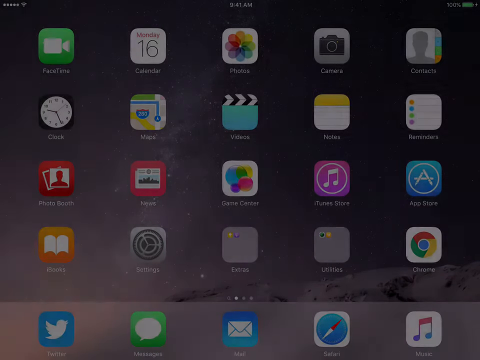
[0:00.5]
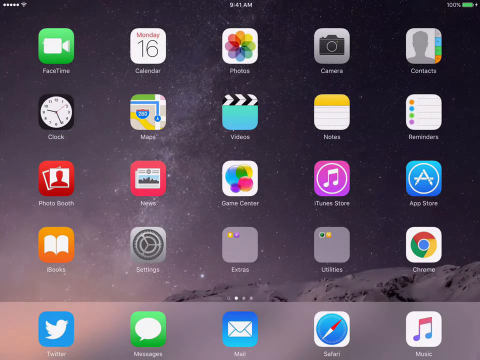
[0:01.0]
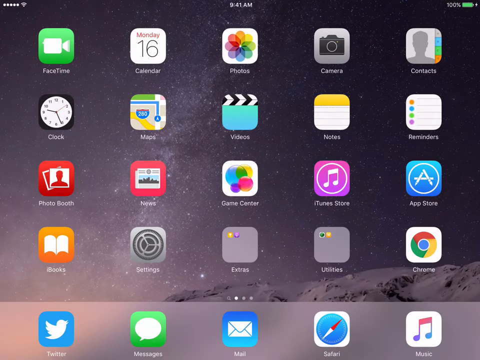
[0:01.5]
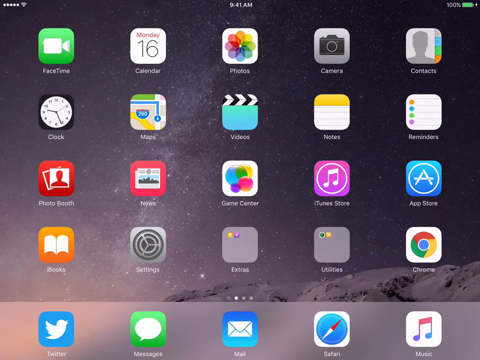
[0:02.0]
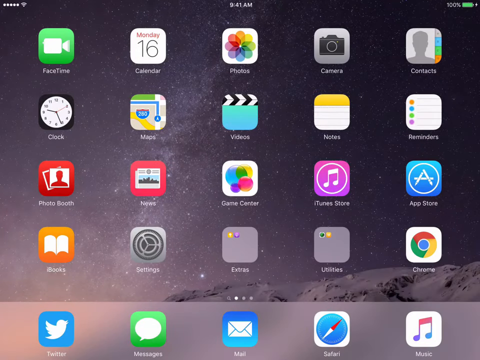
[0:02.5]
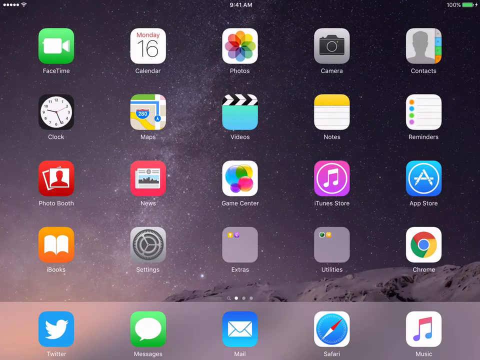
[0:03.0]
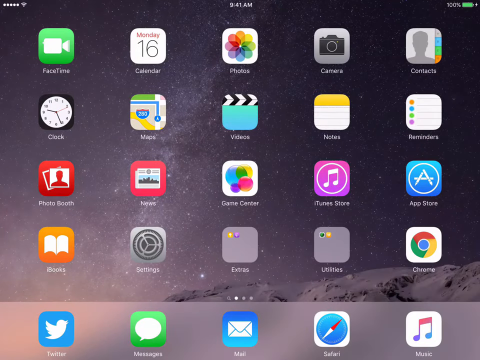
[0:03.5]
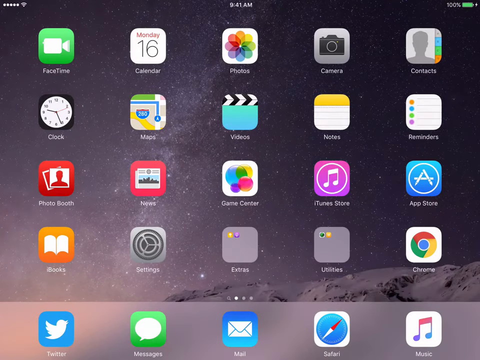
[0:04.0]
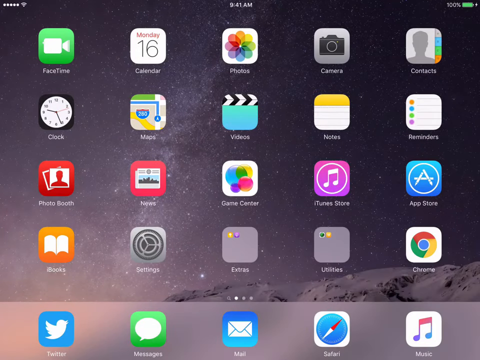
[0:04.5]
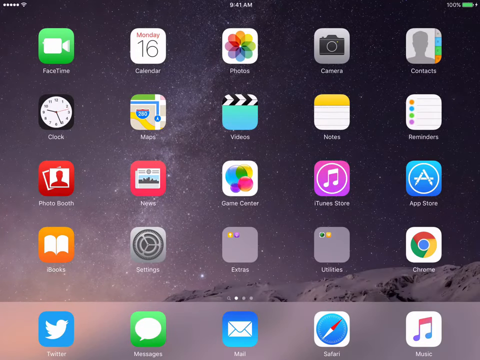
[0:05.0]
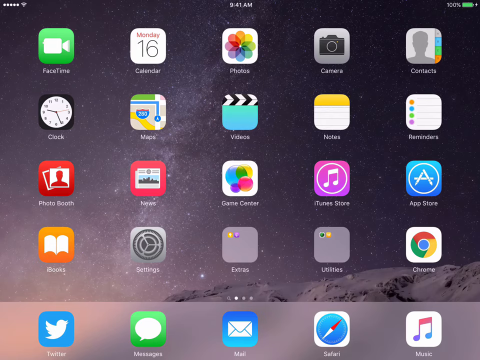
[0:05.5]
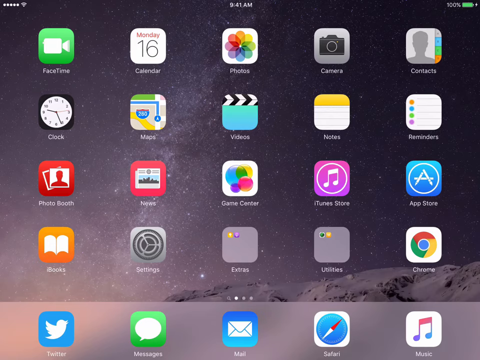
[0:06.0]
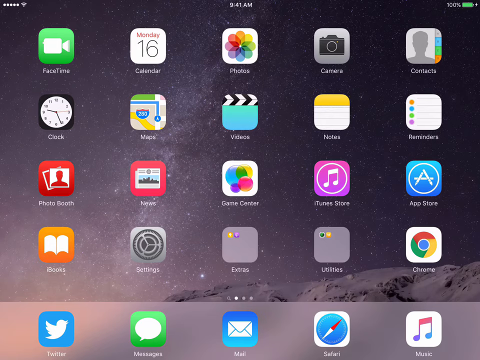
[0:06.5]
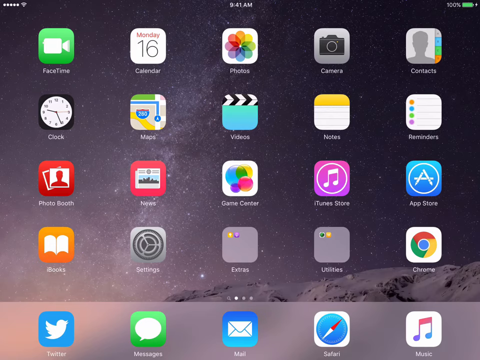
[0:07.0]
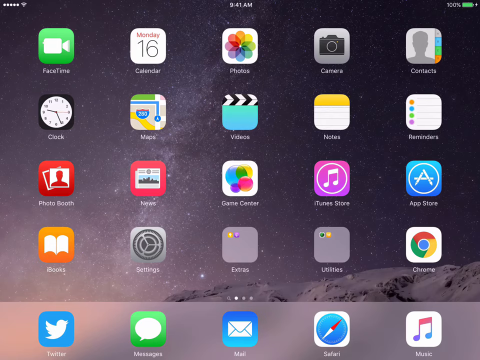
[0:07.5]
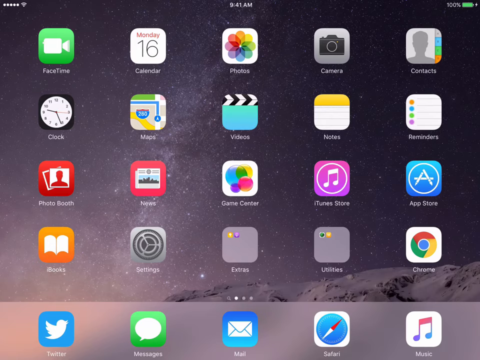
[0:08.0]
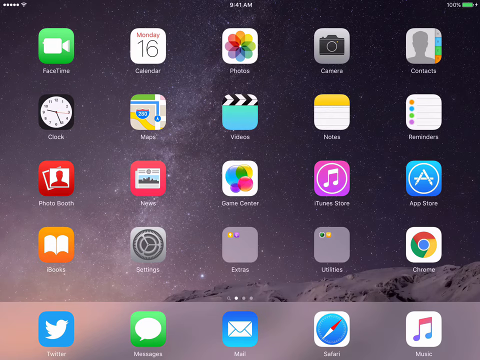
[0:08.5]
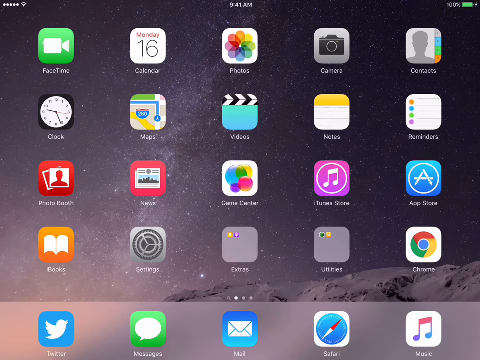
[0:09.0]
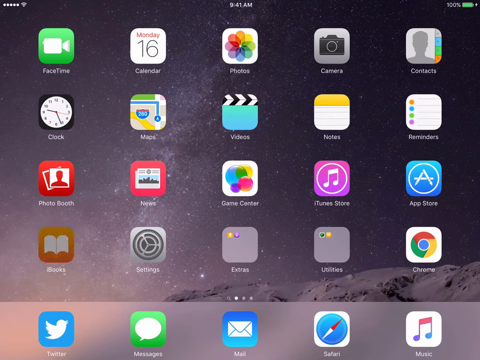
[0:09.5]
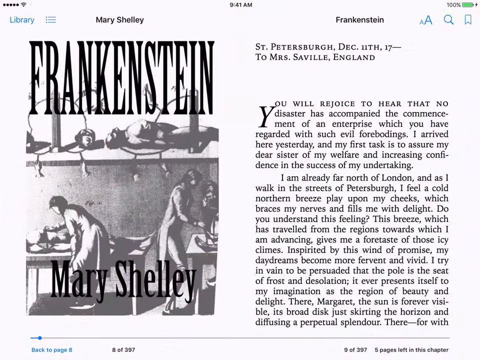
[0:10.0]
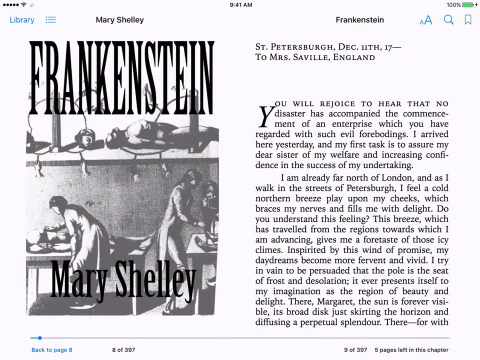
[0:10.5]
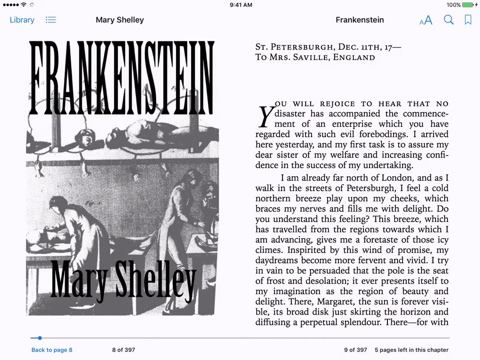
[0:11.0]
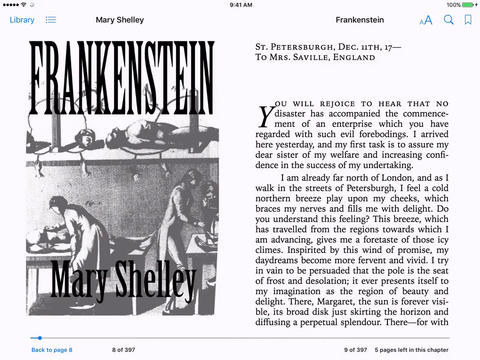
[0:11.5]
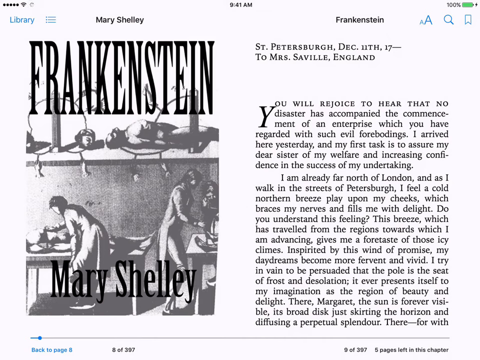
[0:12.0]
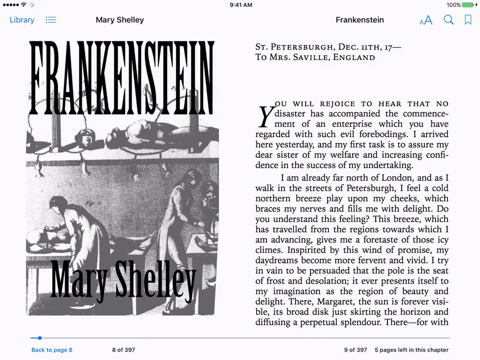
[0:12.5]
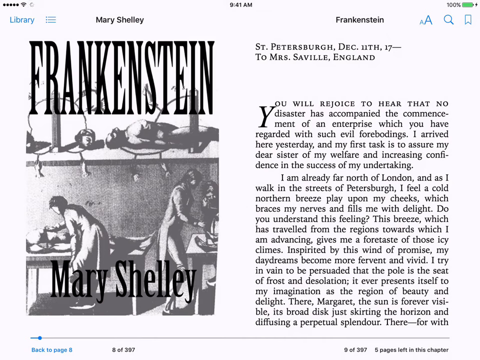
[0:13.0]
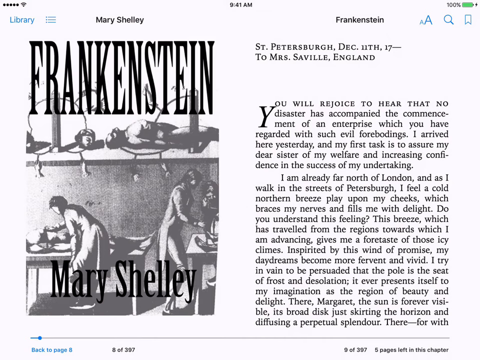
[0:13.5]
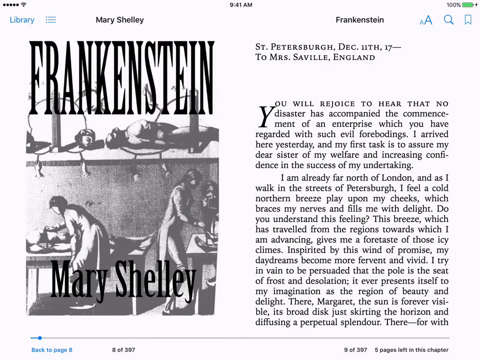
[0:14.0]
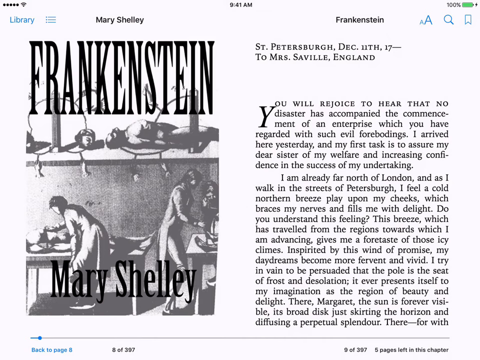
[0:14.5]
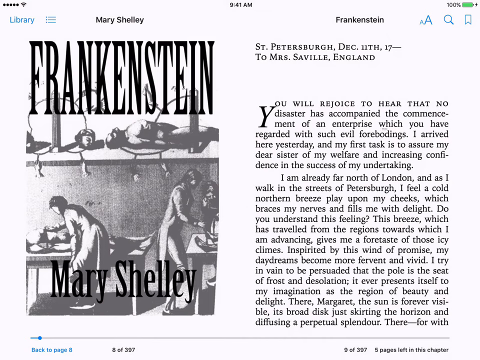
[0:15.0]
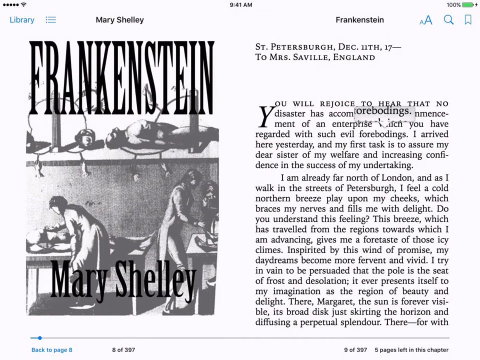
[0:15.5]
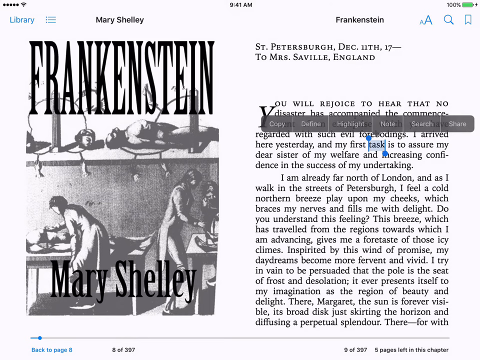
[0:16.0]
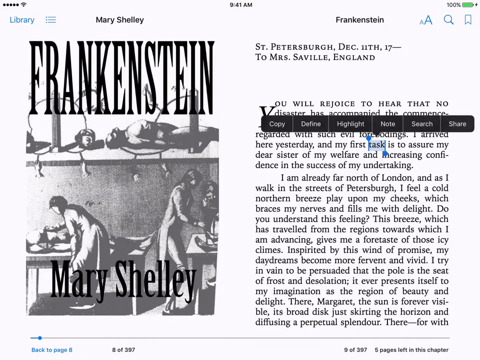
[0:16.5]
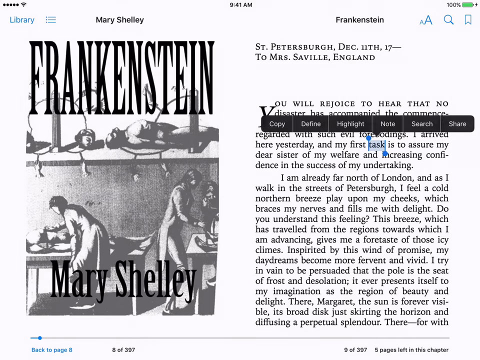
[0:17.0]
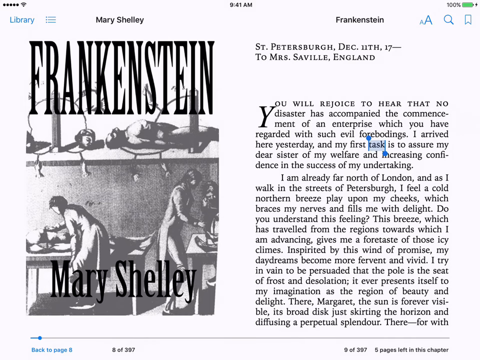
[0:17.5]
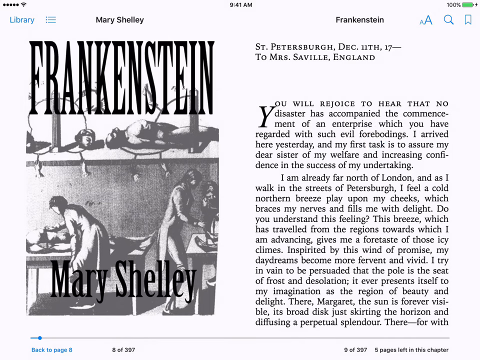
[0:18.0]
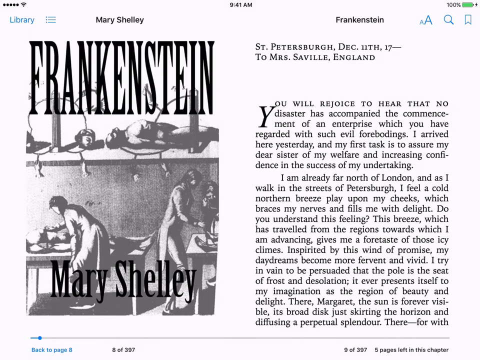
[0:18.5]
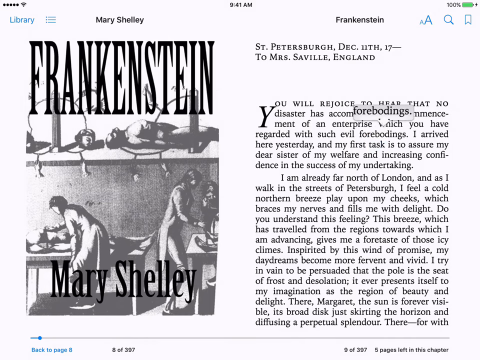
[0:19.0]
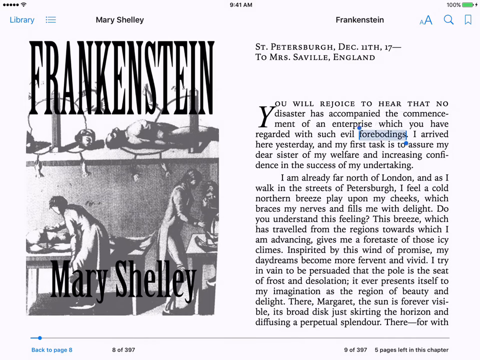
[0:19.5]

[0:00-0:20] An iPad home screen is shown, with a night-sky wallpaper featuring stars and a mountain range. Several app icons are visible, including FaceTime, Calendar, Clock, Maps, Videos, Notes, Photo Booth, News, Game Center, iTunes Store, App Store, Books, Settings, Extras, Utilities, and Chrome. The screen then shows an e-reader displaying the beginning of Mary Shelley's novel Frankenstein. The title "Frankenstein" is prominently displayed in large black letters on the left side. Below the title is an illustration of a person working on the table, with "Mary Shelley" written underneath. On the right of the screen is the start of letters, dated and addressed to Mrs. Shavell, England. The letters begin with the narrator reassuring Mrs. Shavell that no disaster has occurred regarding an enterprise. Several words are selected; for example, the word "task" from the novel is being selected.